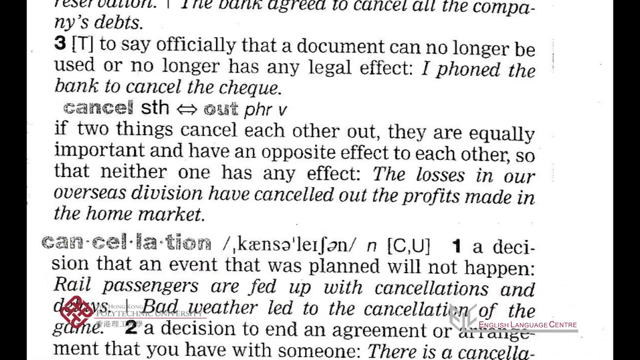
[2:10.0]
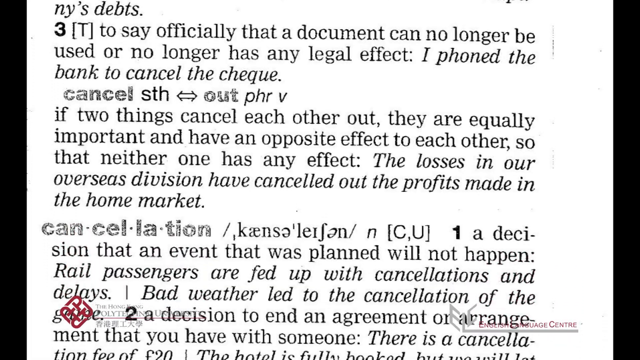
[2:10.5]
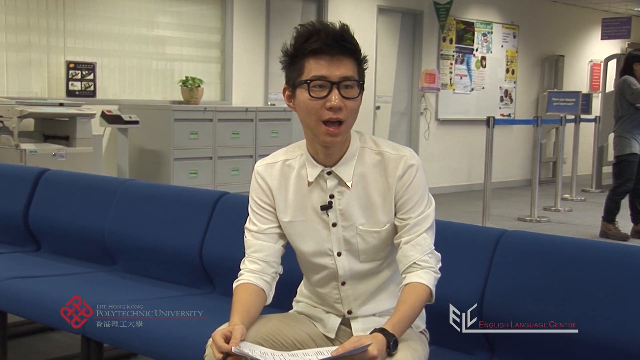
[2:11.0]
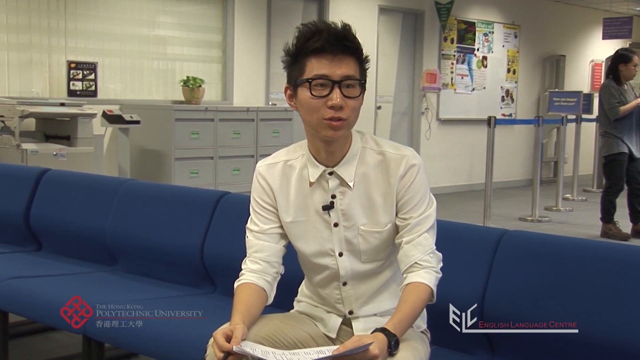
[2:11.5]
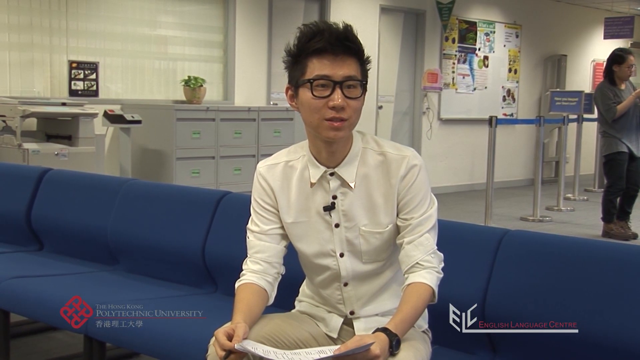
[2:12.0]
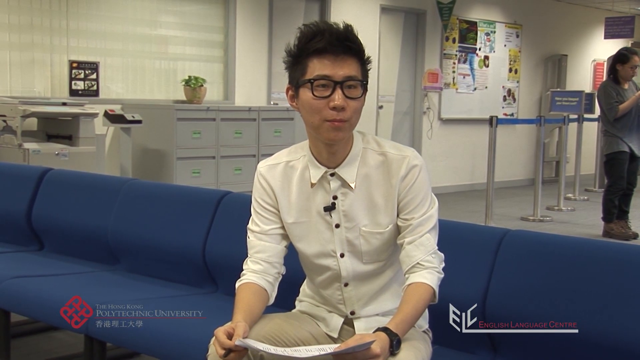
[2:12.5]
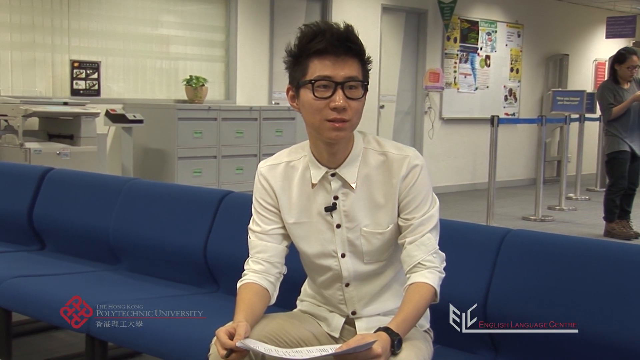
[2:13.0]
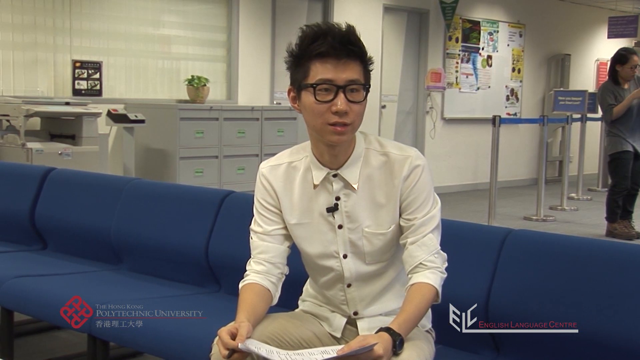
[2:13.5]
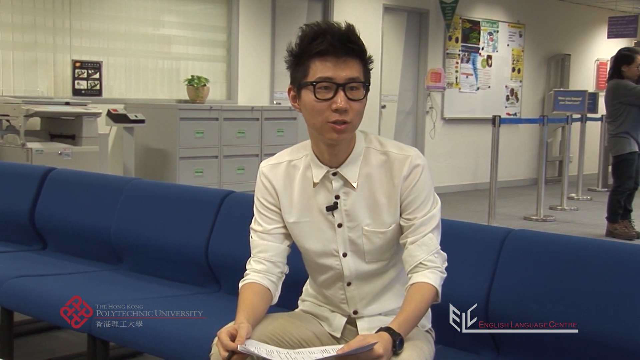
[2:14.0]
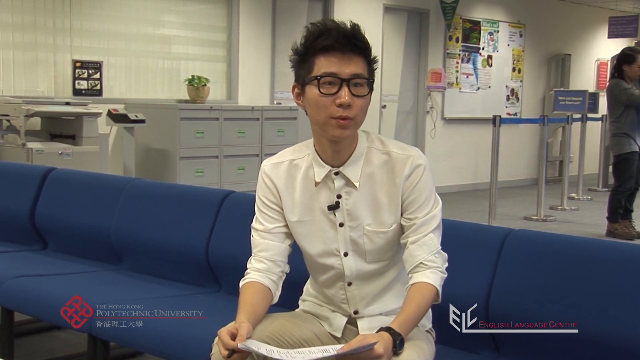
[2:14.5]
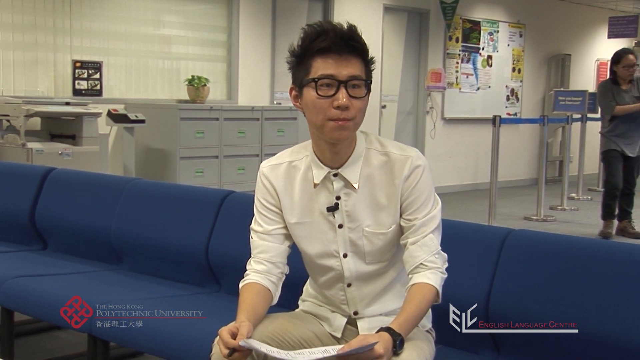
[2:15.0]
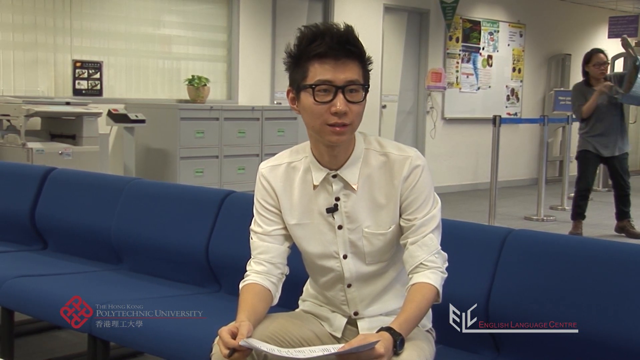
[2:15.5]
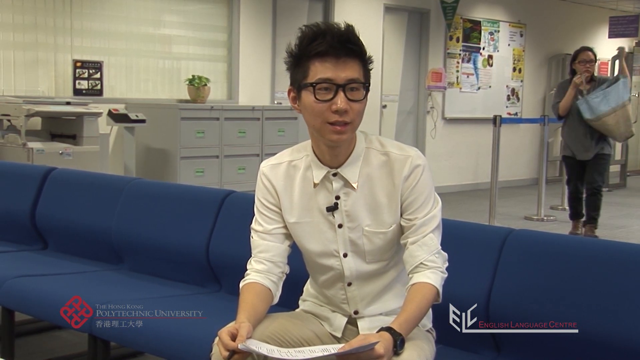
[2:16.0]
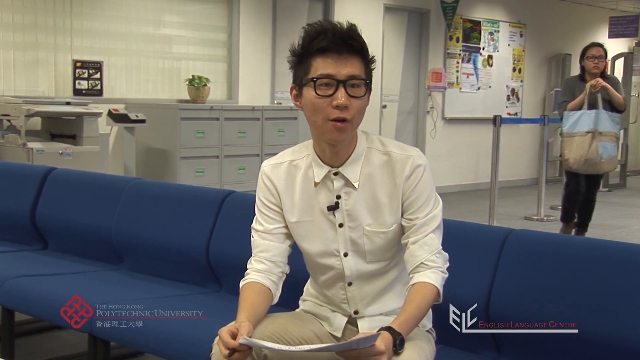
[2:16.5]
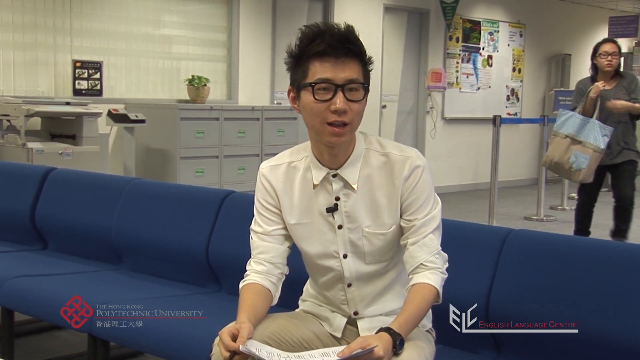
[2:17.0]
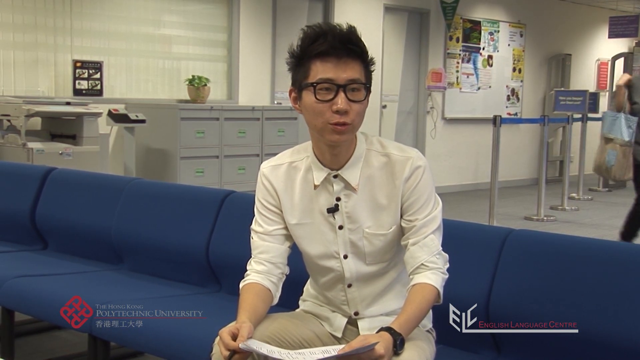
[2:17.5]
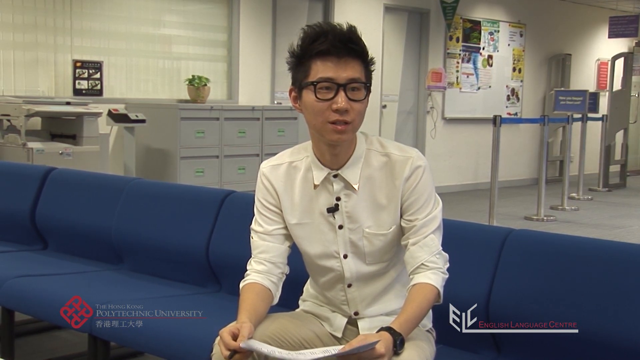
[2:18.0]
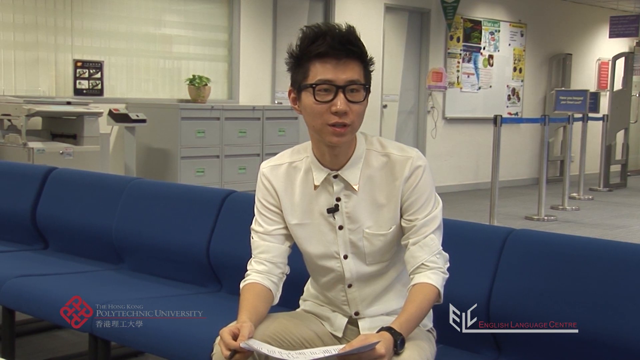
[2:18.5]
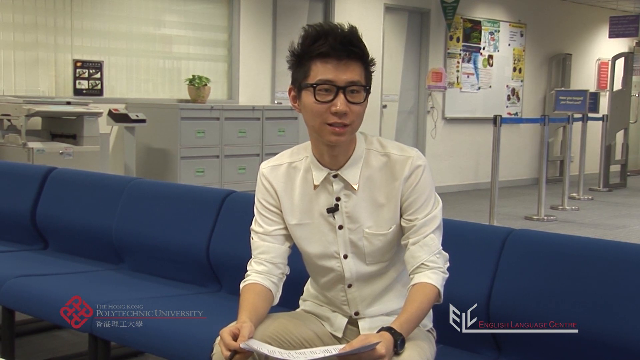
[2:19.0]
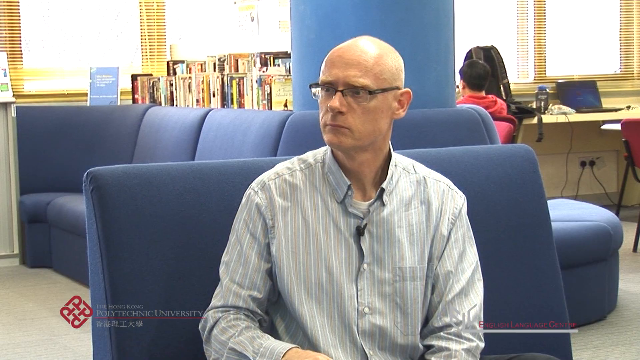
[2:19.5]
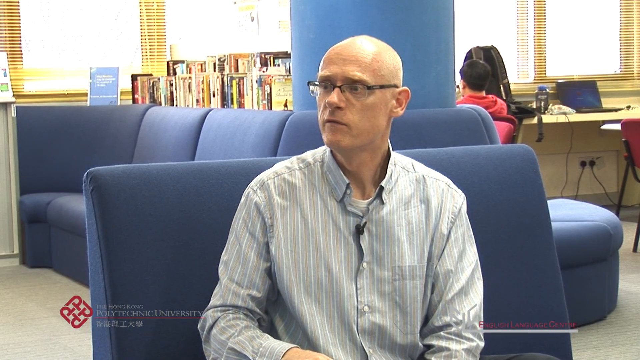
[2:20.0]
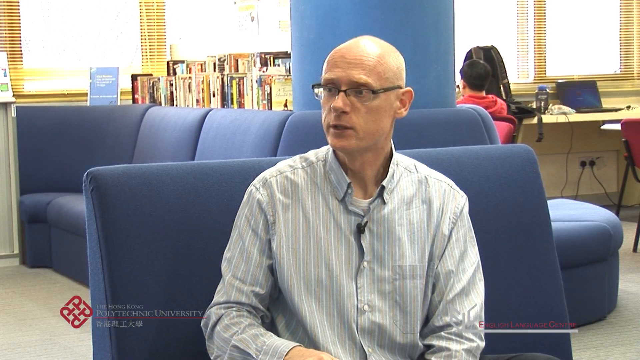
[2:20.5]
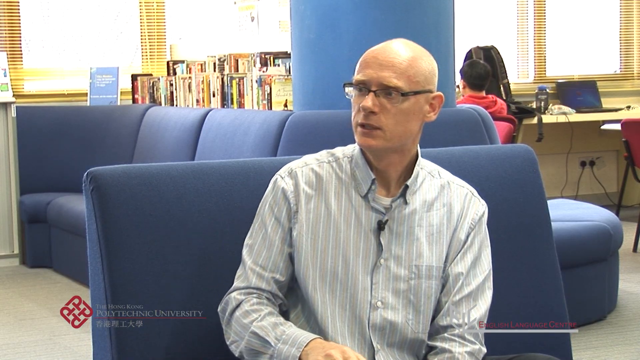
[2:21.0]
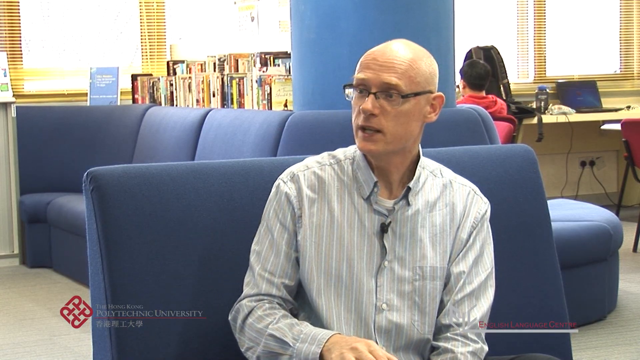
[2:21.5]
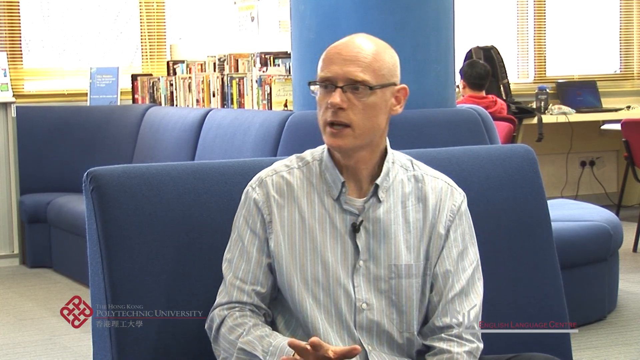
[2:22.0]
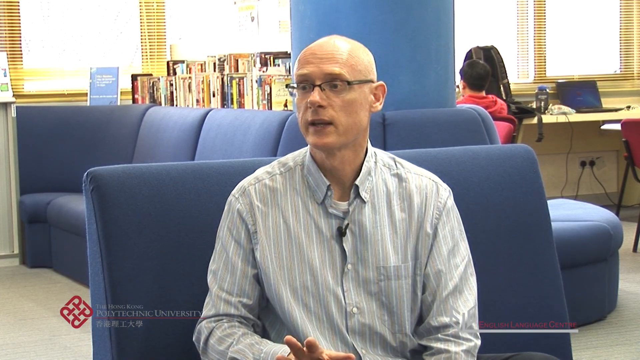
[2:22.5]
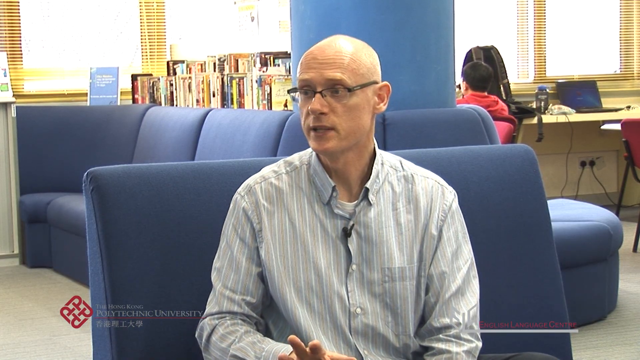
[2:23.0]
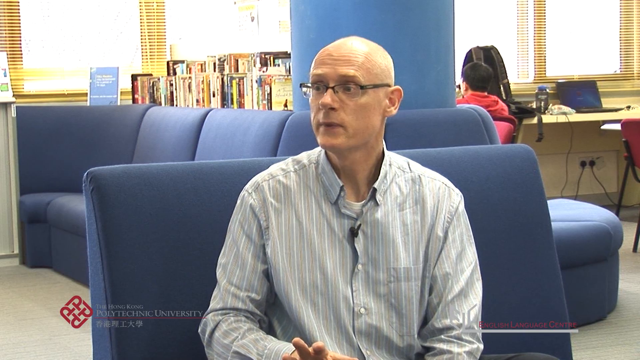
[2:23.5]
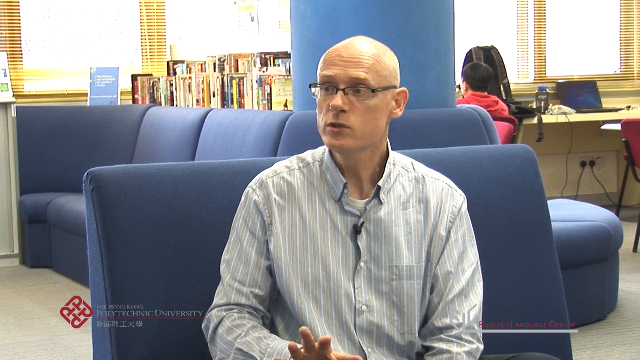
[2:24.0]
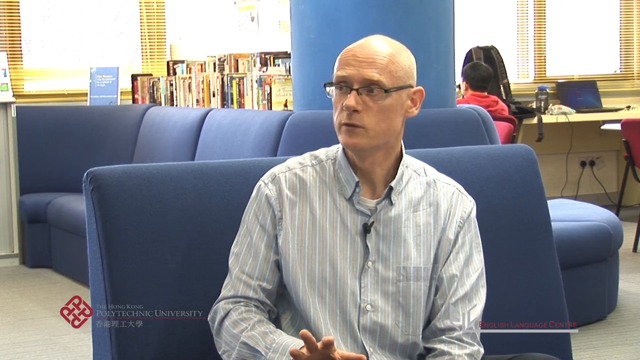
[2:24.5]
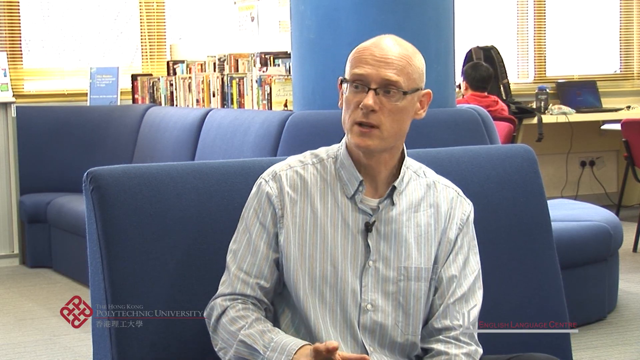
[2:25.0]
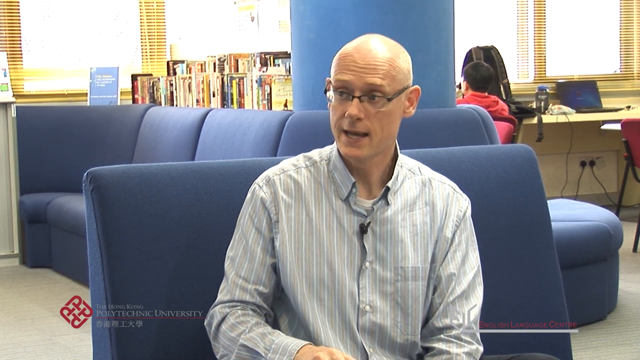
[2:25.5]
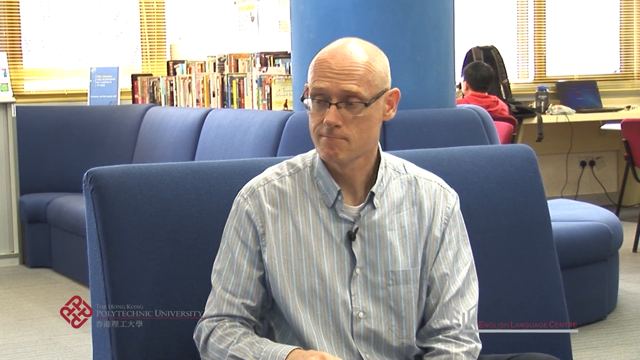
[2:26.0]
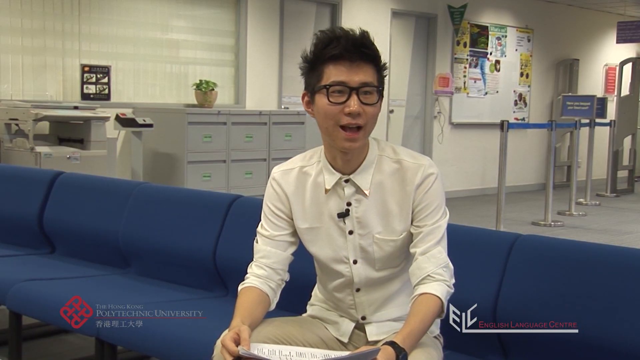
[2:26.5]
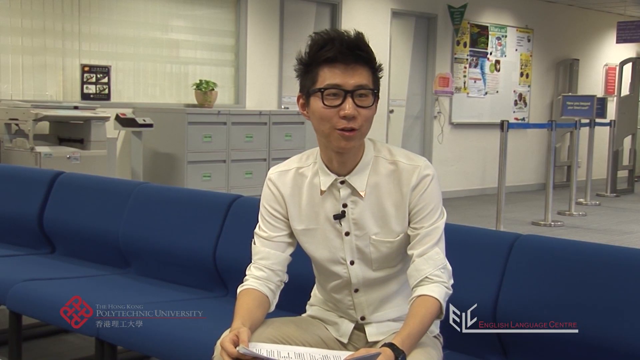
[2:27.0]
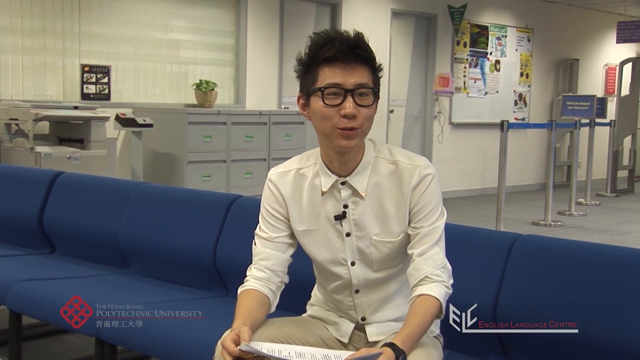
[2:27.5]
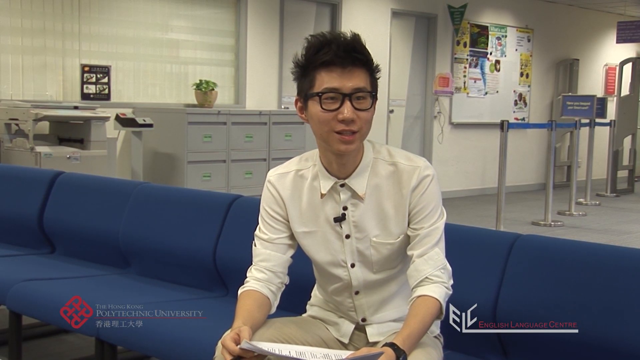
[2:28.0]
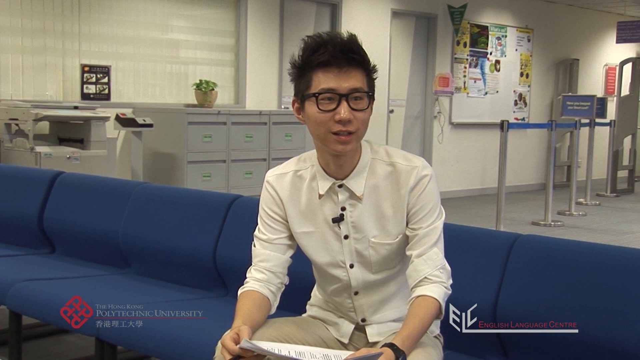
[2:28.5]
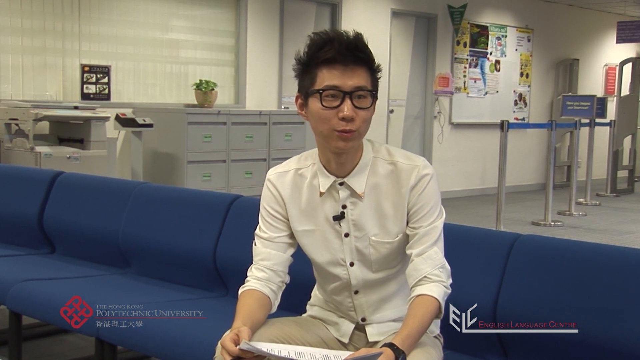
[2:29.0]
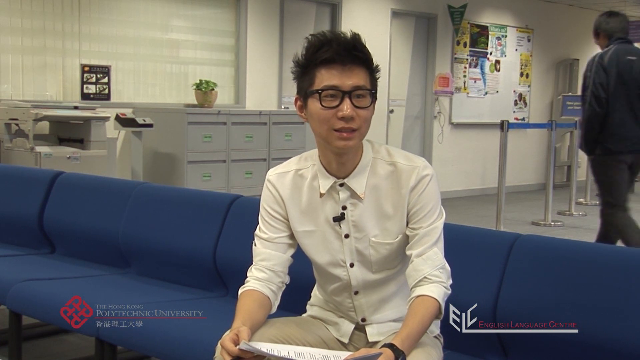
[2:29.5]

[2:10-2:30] A dictionary shows definitions for the word "counsel," beginning with the second and third. The third is marked "T," for transitive, with the definition "to say officially that a document can no longer be used or no longer has any legal effect," followed by an italic sentence: "I phone the bank to counsel the check." The page scrolls down. Then a young male student is shown sitting on a couch, wearing a white shirt, glasses, and a microphone on his shirt, with black spiky hair. As he talks, another library patron walks through the background and out. The camera switches to the professor, who is bald, wears glasses and a blue shirt with vertical stripes and a microphone, and is sitting on a blue double couch. Behind him a person in a red shirt is studying with a black backpack, a water bottle, and a laptop, and to the left are some books on a shelf. The professor talks to the student. The video cuts back to the student, and they are talking. Another person wearing a dark jacket walks by in the background.